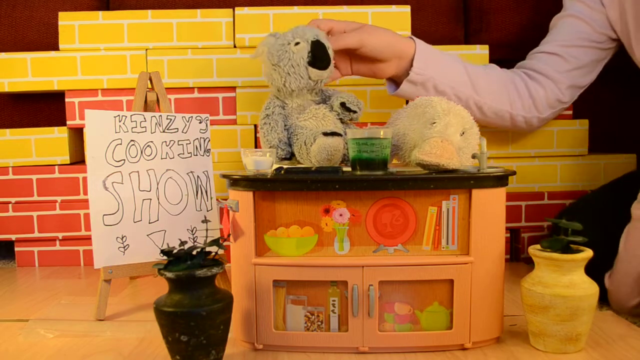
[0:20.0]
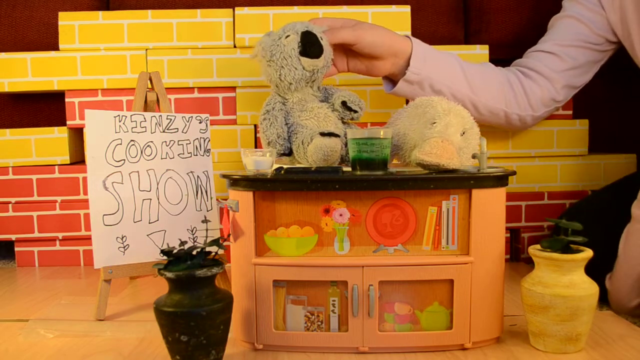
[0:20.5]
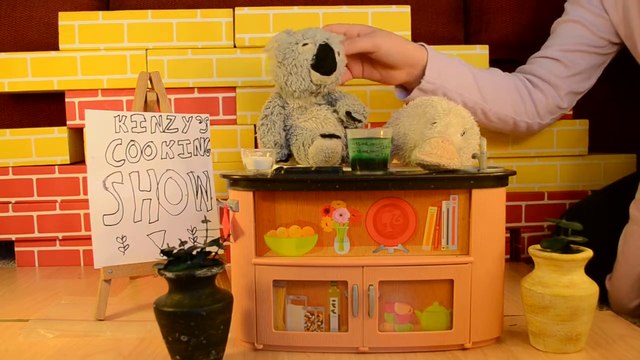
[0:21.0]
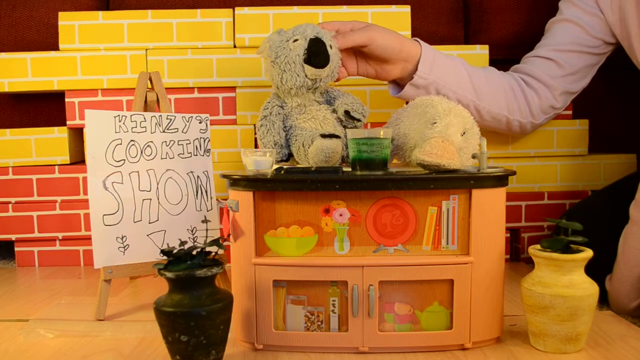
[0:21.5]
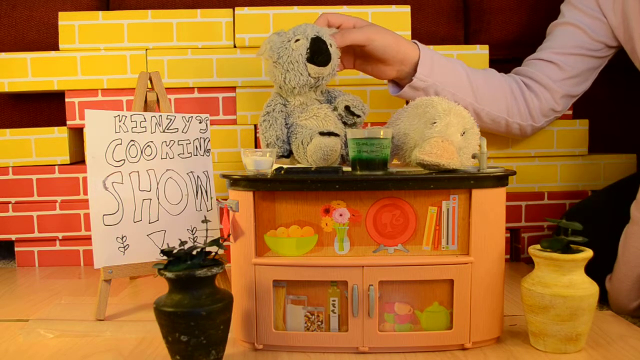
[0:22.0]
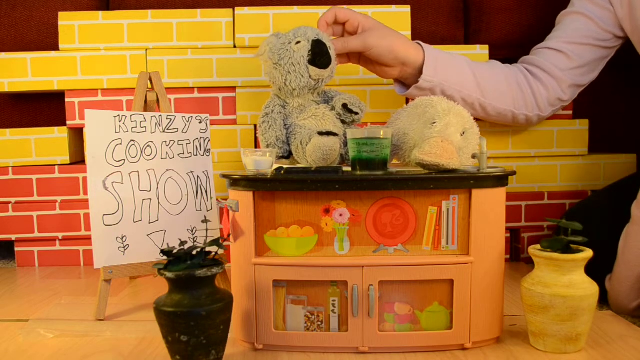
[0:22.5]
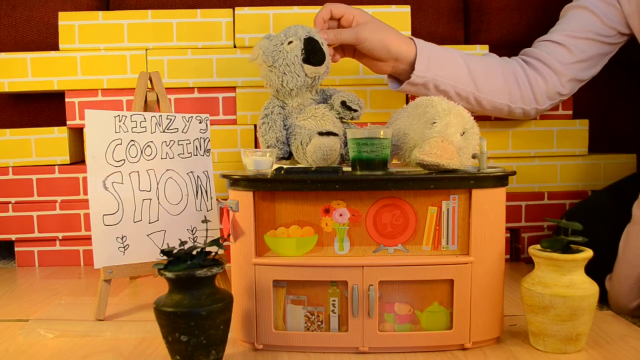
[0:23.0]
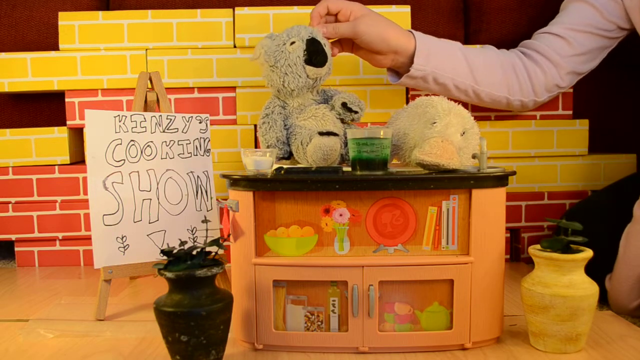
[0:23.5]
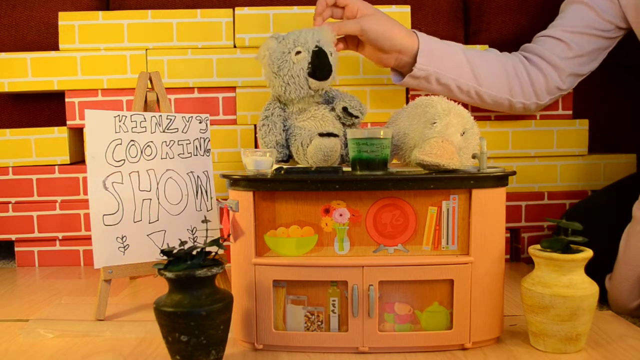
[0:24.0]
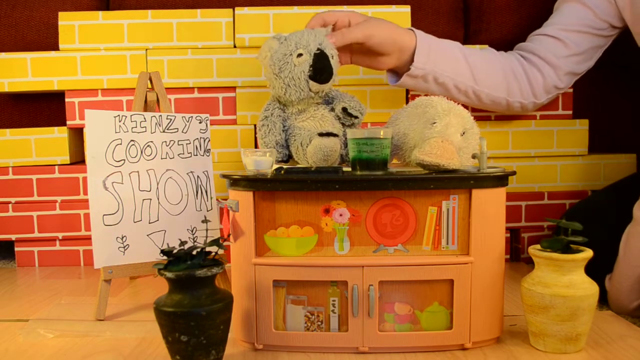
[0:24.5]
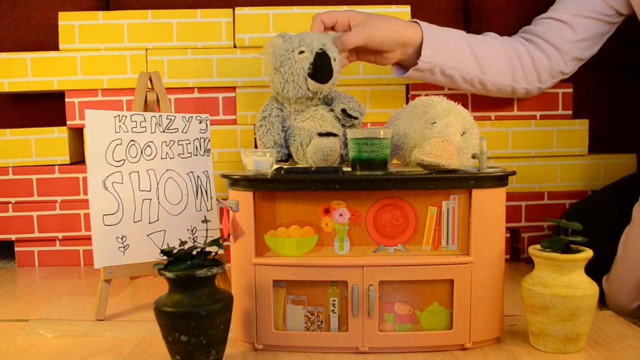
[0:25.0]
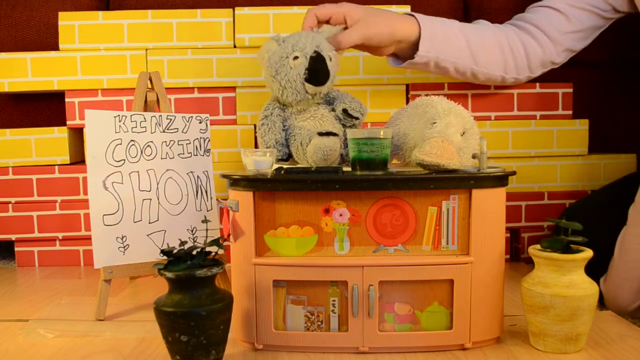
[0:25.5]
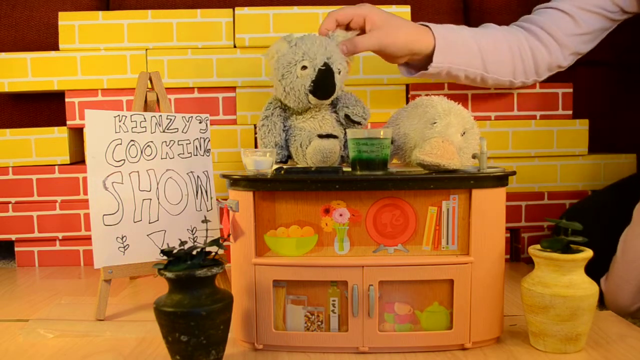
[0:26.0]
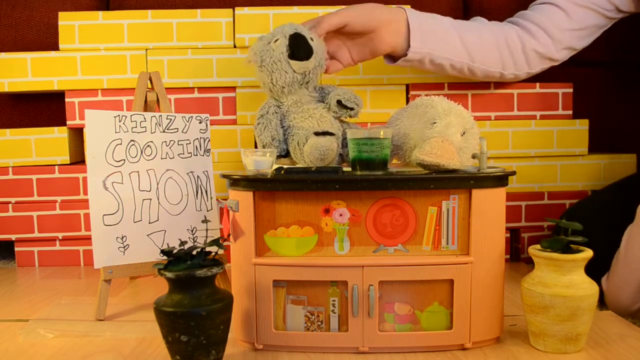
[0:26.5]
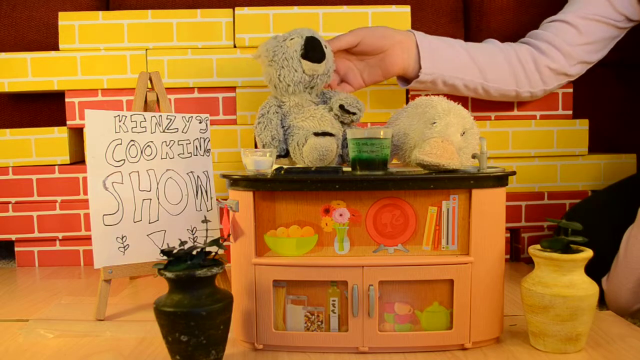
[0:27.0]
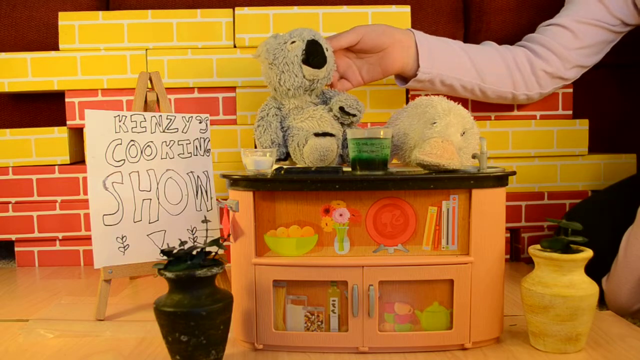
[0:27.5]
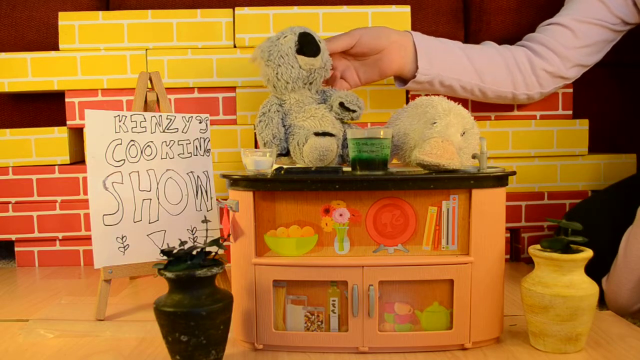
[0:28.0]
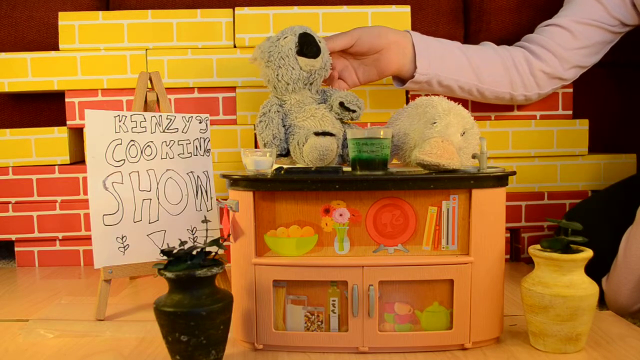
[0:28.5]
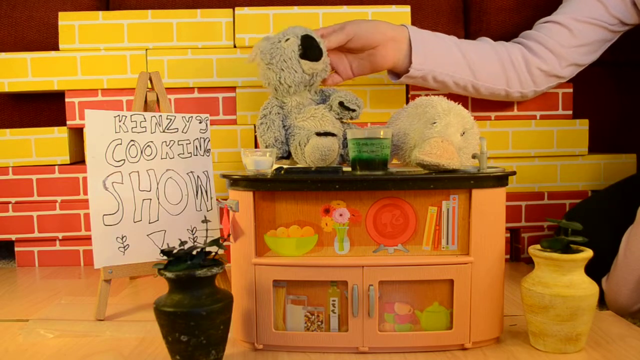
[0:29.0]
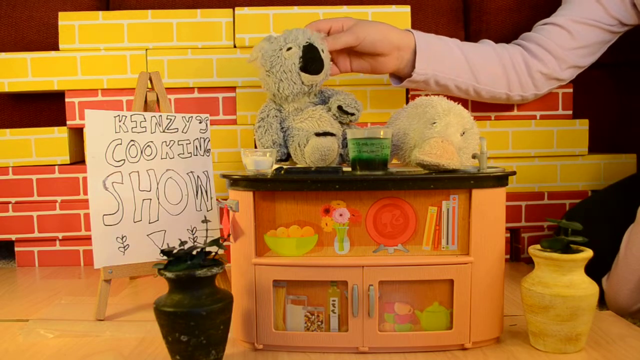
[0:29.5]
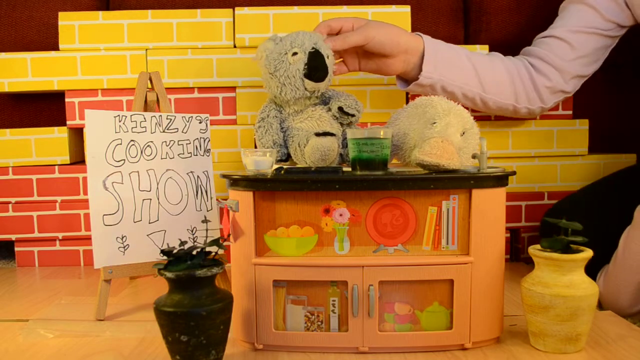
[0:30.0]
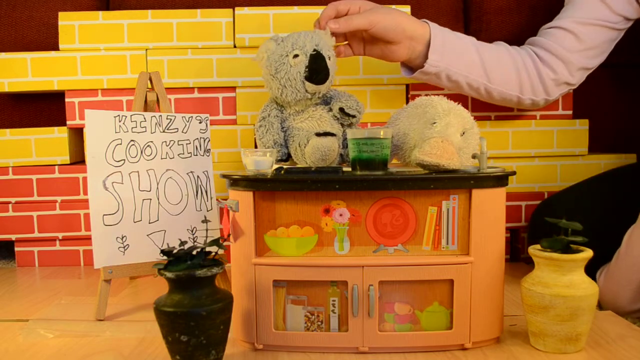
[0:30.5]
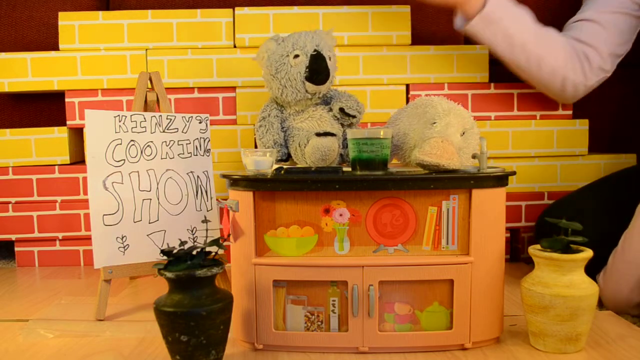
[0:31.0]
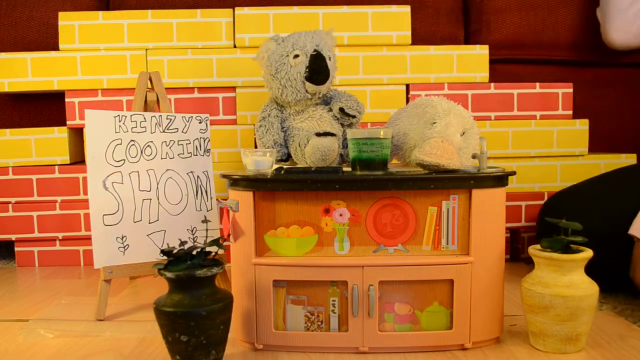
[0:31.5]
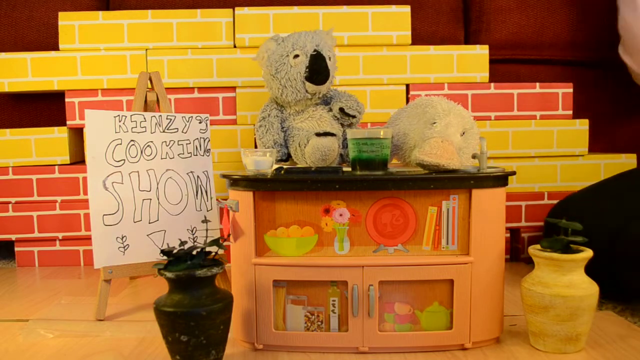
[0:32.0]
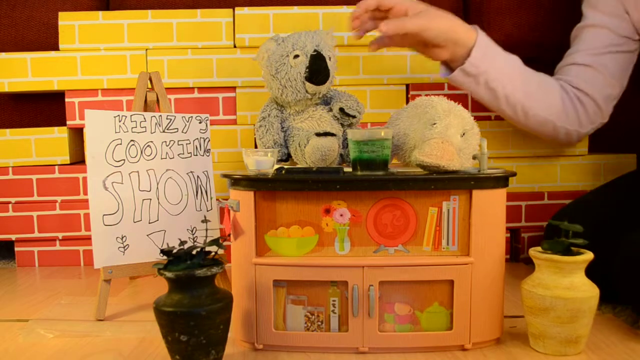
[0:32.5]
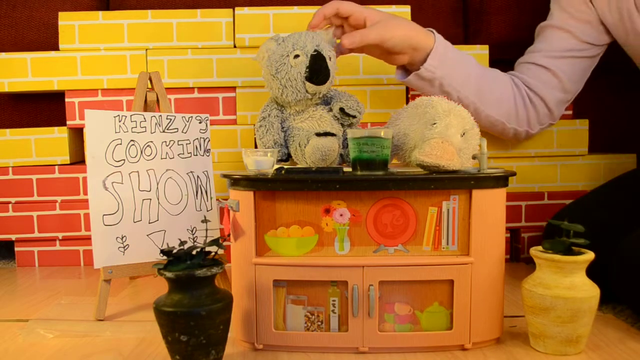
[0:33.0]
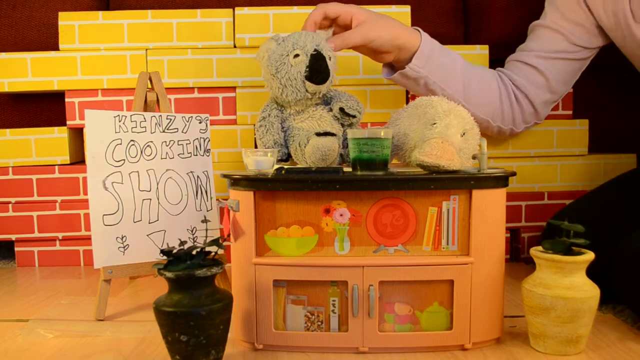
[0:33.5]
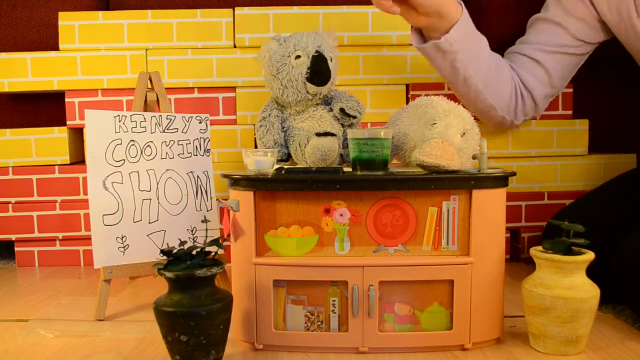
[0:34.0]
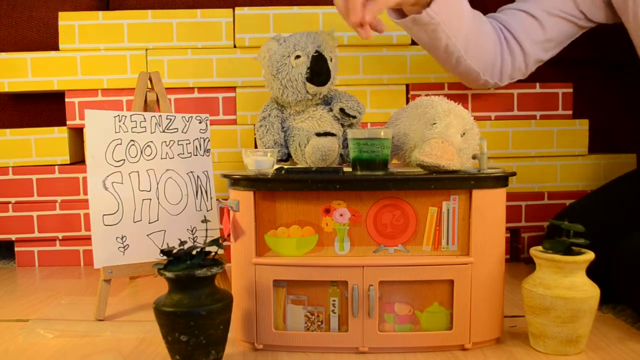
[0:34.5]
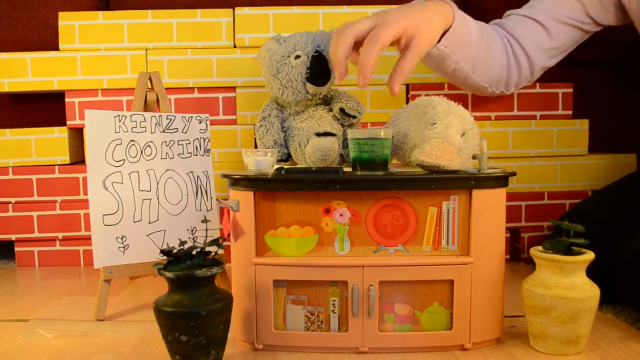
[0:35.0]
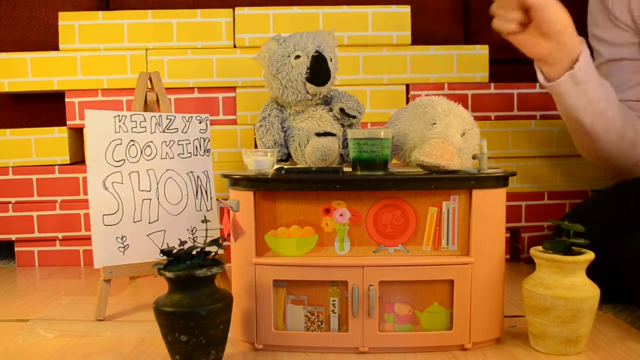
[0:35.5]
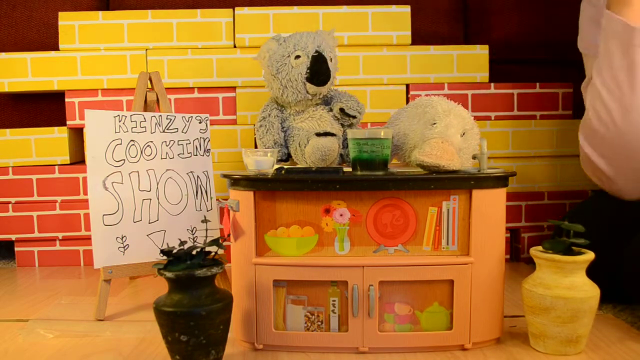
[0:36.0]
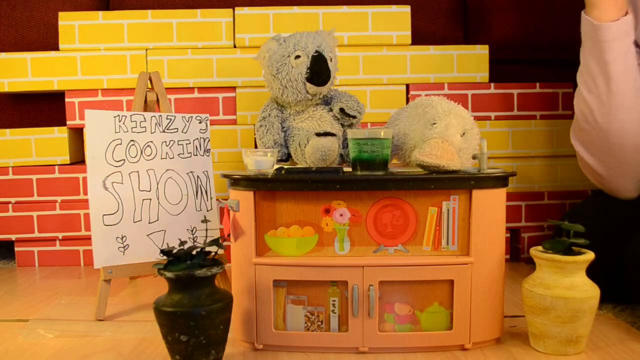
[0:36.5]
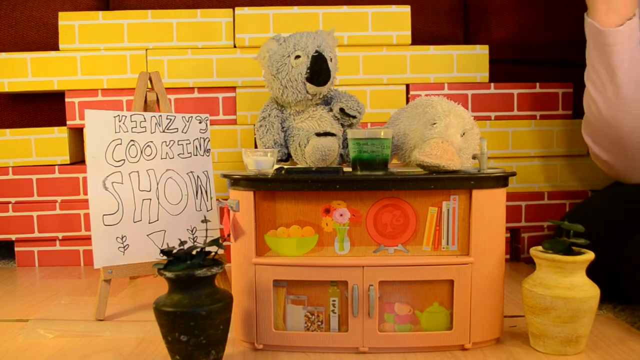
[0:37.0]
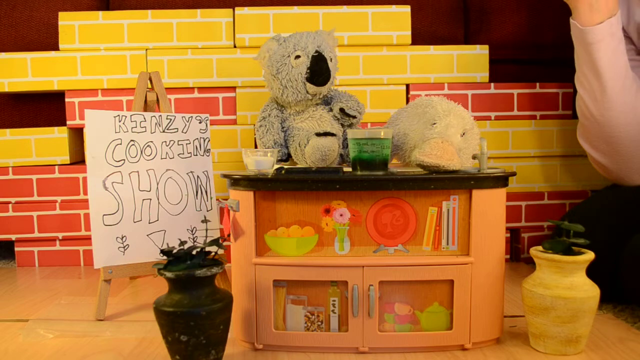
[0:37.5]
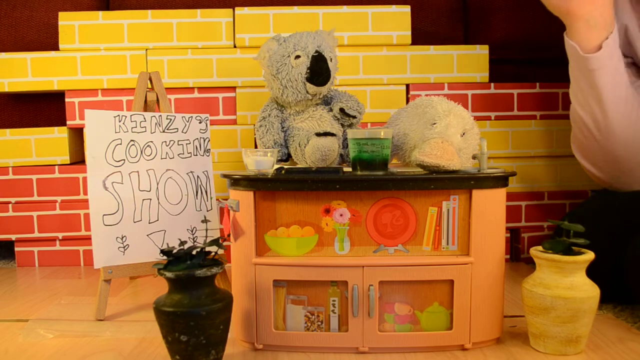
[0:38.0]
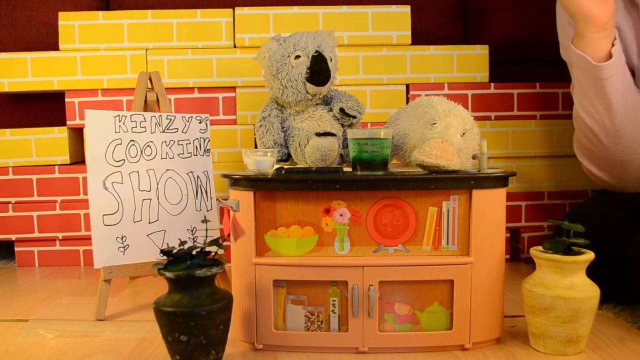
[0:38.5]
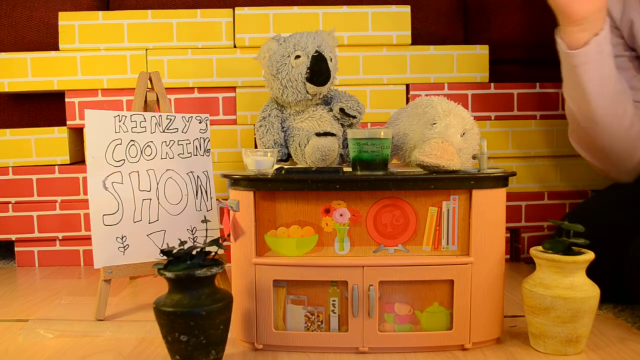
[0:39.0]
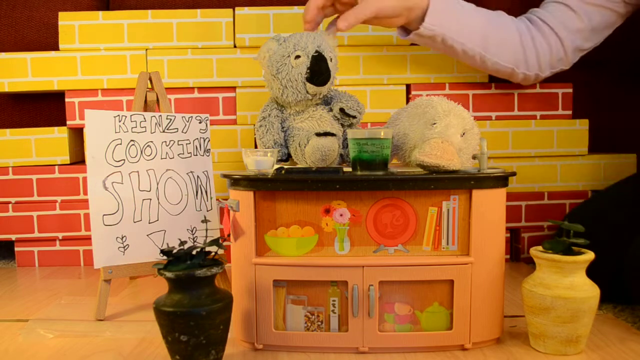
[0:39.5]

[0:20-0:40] A whiteboard leans on a ladder. It bears the handwritten words "Kinzi's cooking show" in black on the white board, and below the writing are a flower and a play button. The ladder rests on a wall of yellow bricks and red bricks, with white lines between the yellow bricks and between the red bricks. In the middle is a cupboard; on top of it are a bowl of salt, a bowl of green substance, and a teddy bear with a black mouth and black eyes. There is also a woollen duck, yellow in color with a yellow beak. Inside the cupboard are a barrel of fruits, a vessel of flowers, a plate, and four recipe books: one yellow, one red, one white, and one red and white.